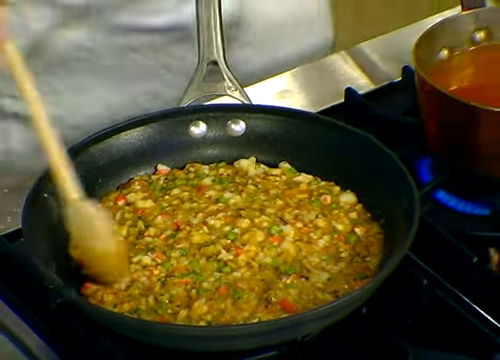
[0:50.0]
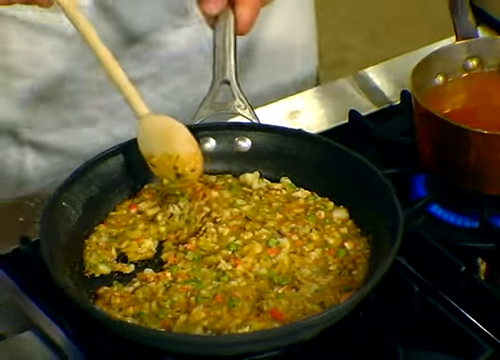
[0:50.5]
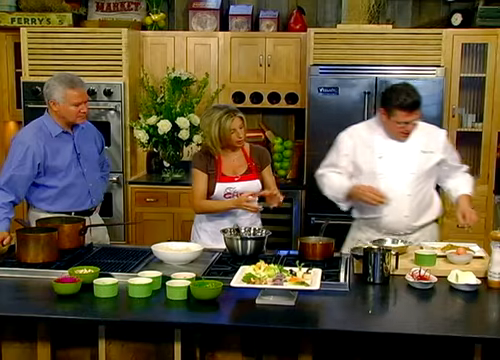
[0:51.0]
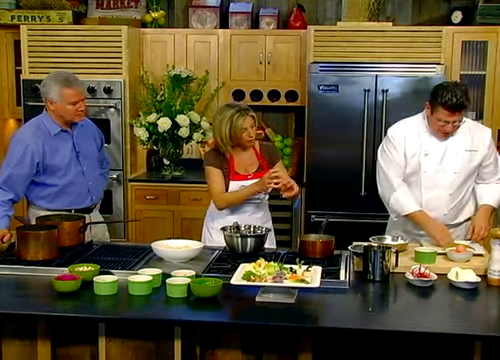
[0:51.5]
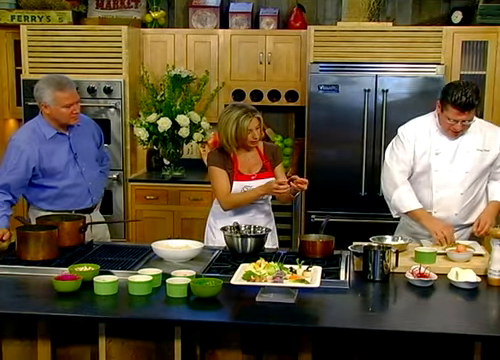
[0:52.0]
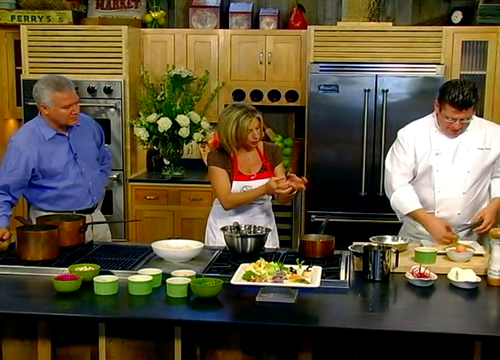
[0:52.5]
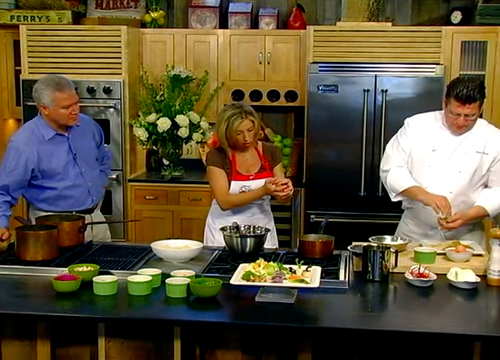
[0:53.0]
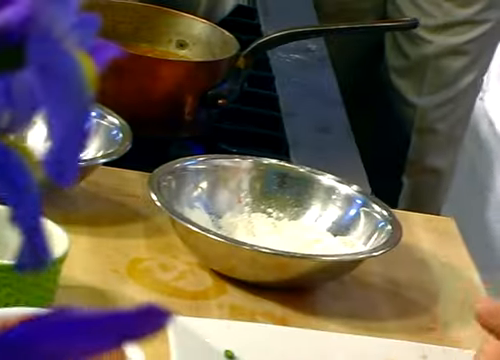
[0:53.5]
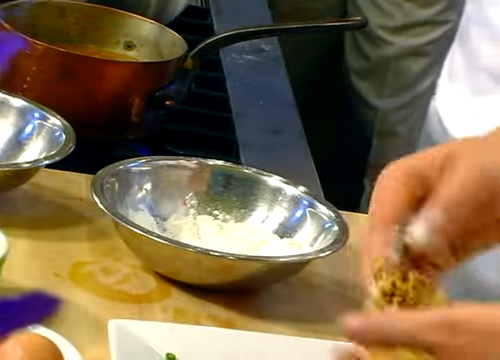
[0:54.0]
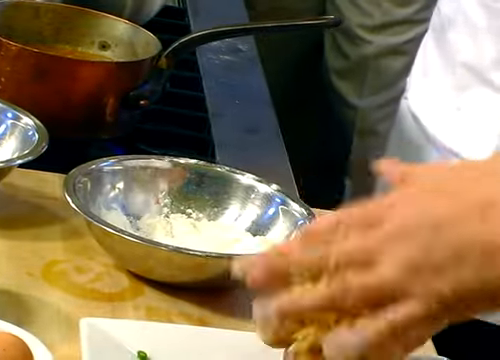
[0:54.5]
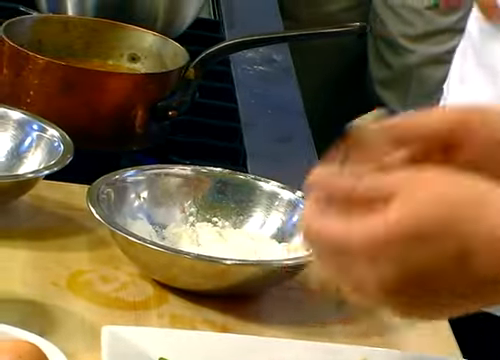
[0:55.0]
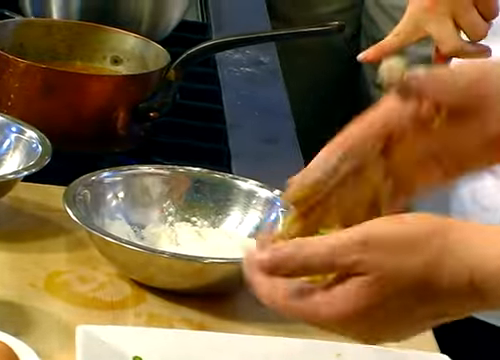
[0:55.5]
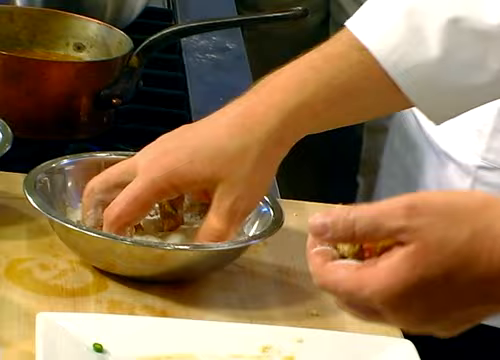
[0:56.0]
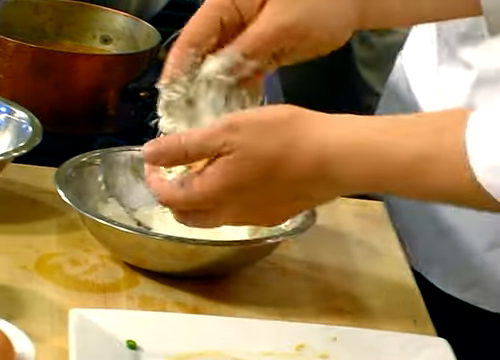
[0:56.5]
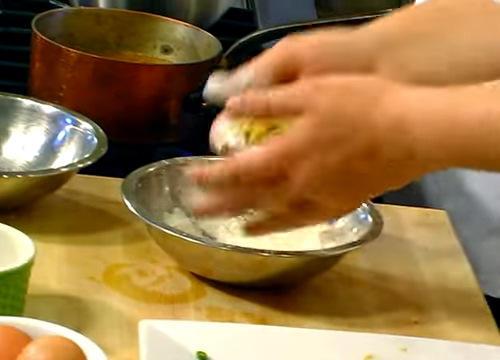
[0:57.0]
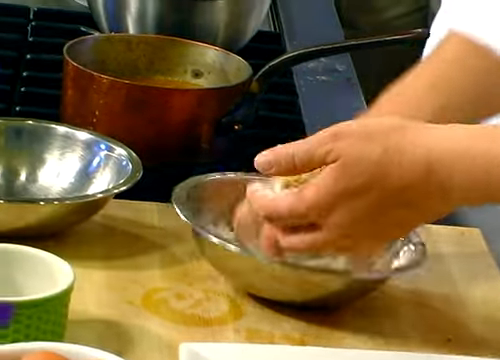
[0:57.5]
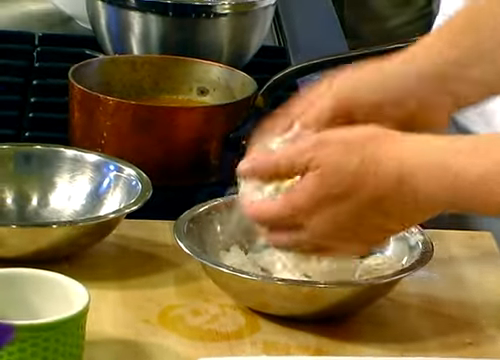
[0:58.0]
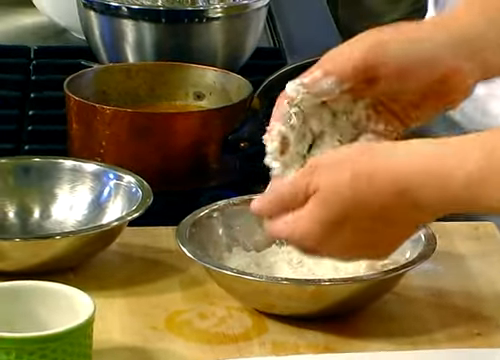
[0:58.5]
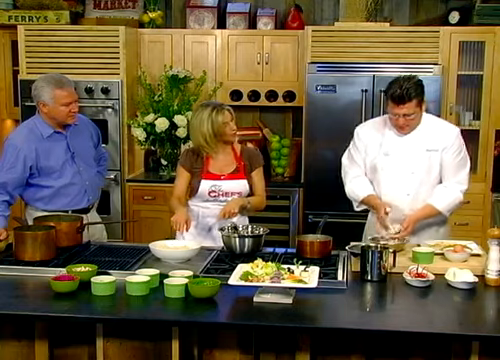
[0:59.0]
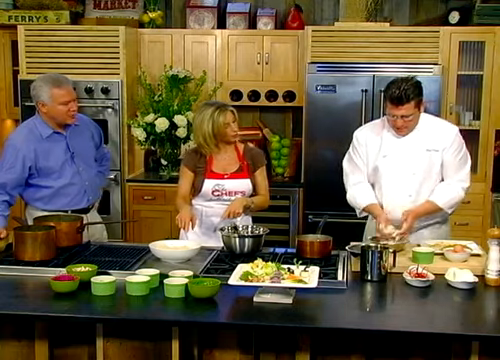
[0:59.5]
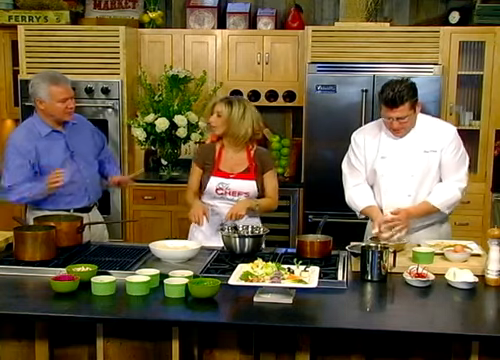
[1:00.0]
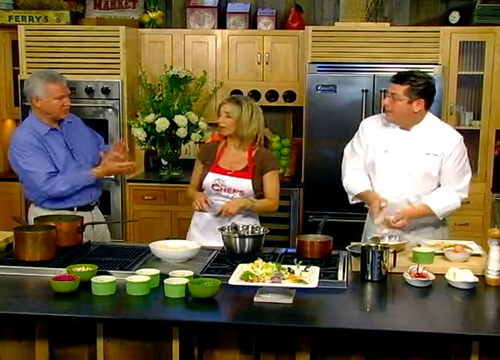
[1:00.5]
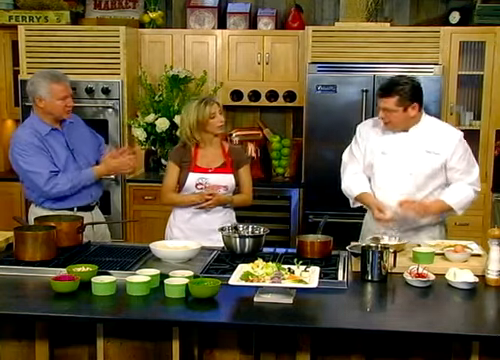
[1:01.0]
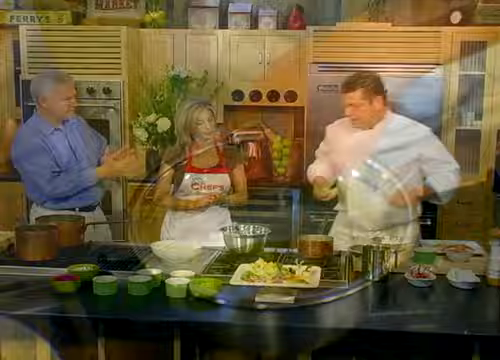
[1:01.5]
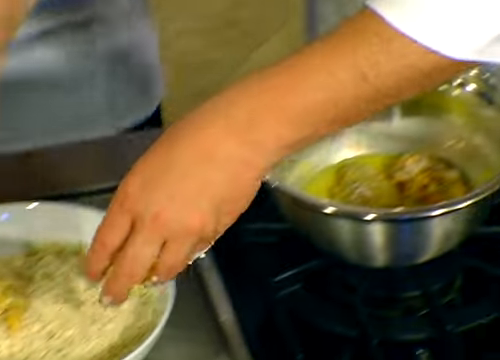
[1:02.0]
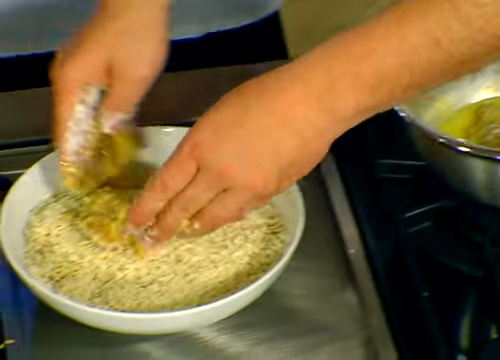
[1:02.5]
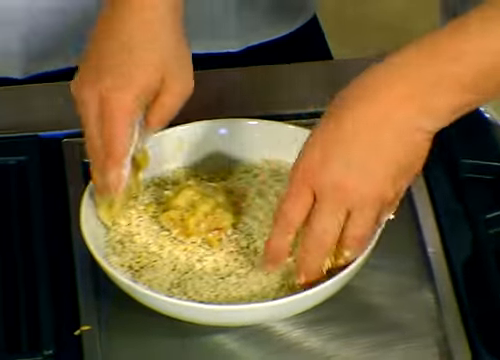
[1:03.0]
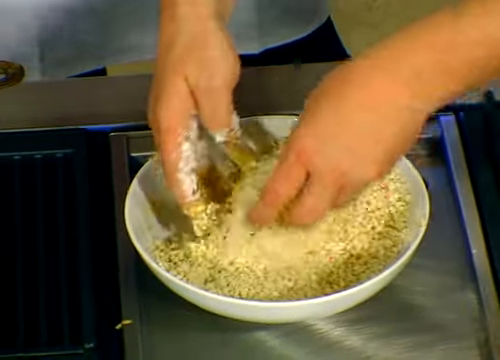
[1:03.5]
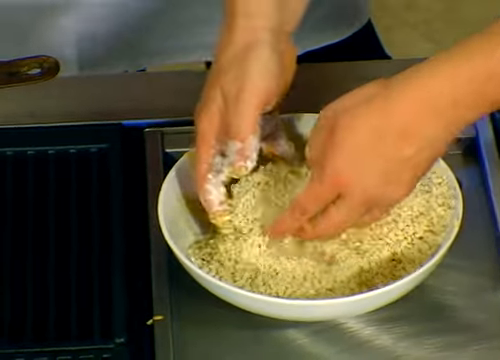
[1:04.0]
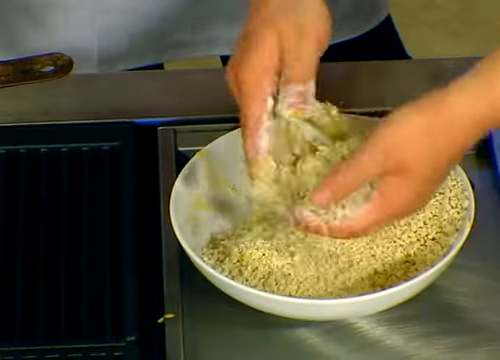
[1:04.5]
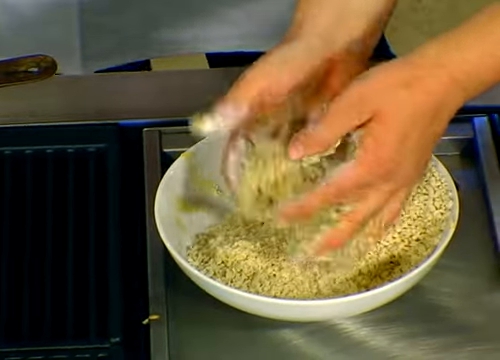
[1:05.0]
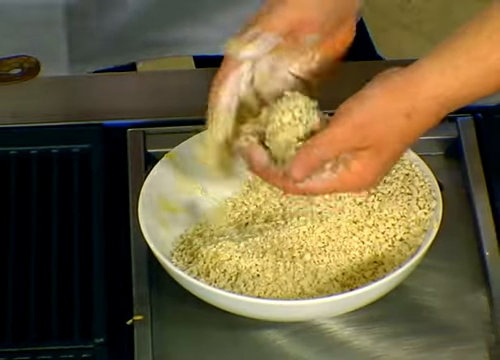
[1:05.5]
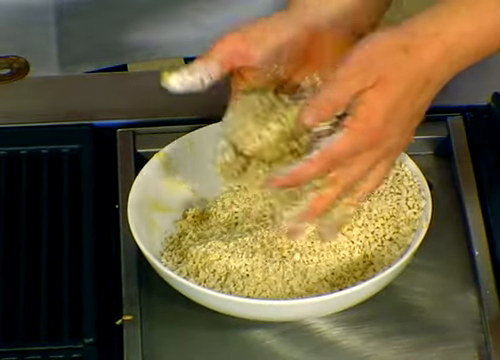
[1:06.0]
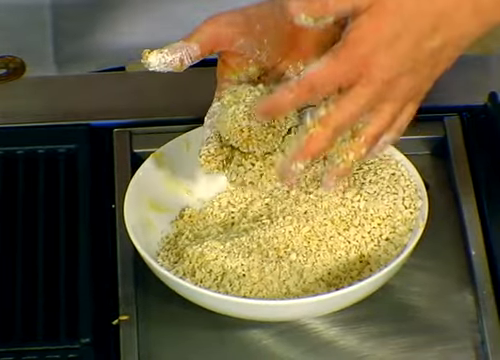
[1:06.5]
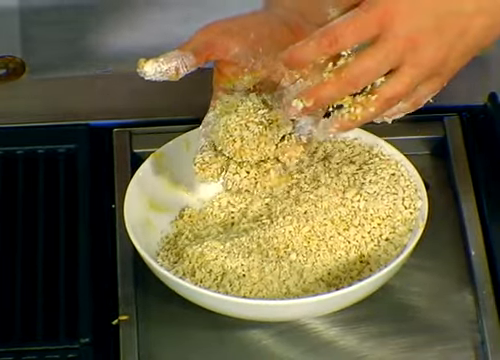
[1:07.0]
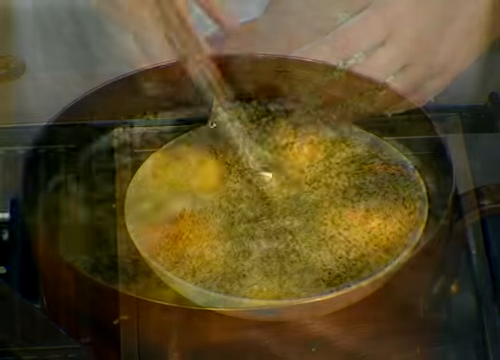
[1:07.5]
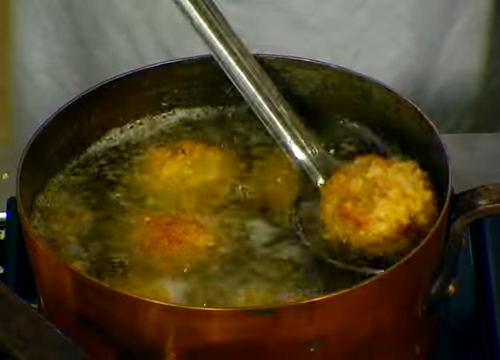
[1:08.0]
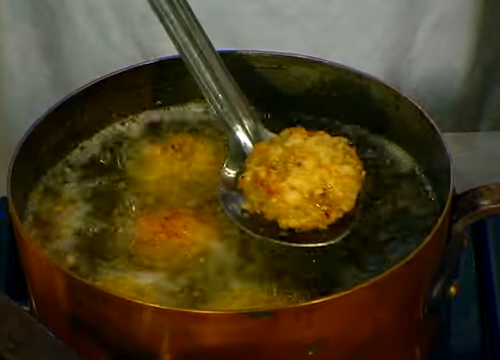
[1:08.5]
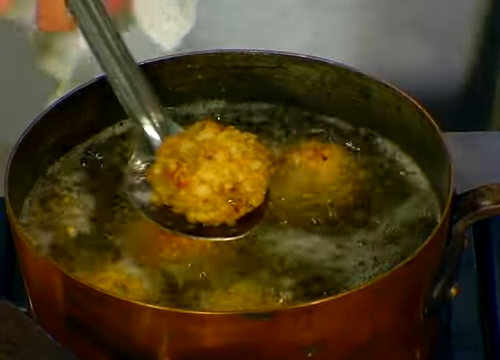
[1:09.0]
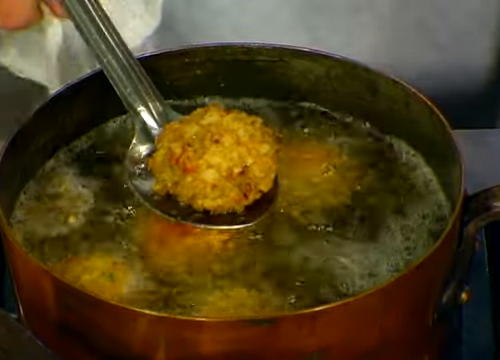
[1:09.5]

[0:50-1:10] Food is on the plate, with a mixture of greens and some oranges in it. The handle of the pan is stainless steel. A pot on the burner beside the other pan holds some kind of gravy, and the blue of the flame appears to be visible. The chef holds the spoon and slides it back and forth on a table. There are several bowls, about five that look the same, and one that looks like them is beside him, along with something purple. Flowers are in the background up on the countertop, and there is a stainless steel fridge. He rolls balls in his hands and coats them in flour from a stainless steel bowl. The other man seems to be talking about his technique. He coats them in what may be some kind of breadcrumbs, then puts them in what looks like boiling oil, where they harden.